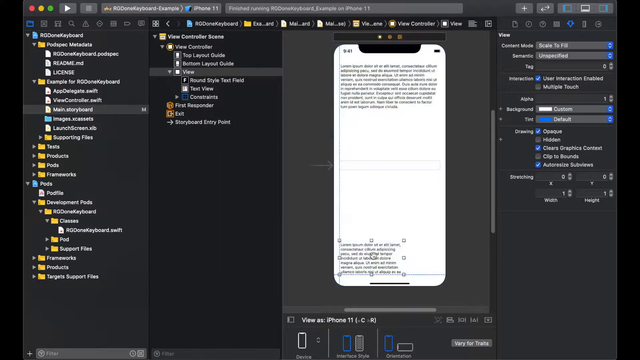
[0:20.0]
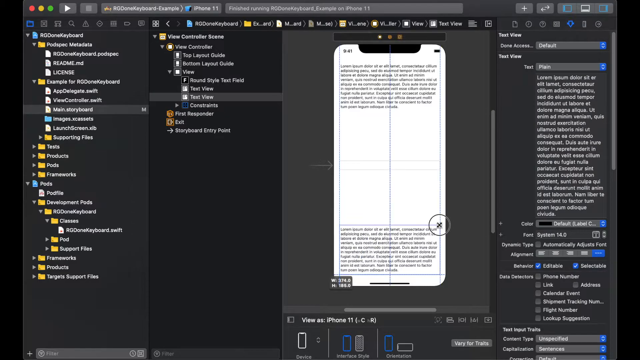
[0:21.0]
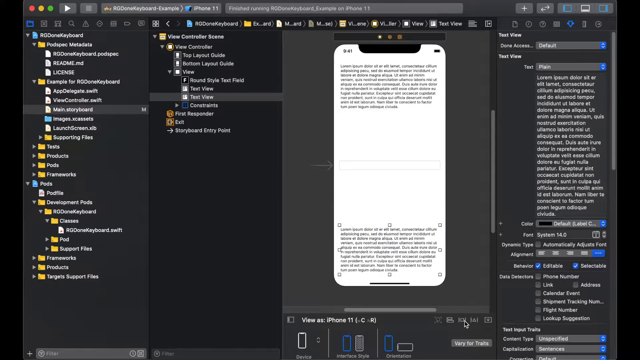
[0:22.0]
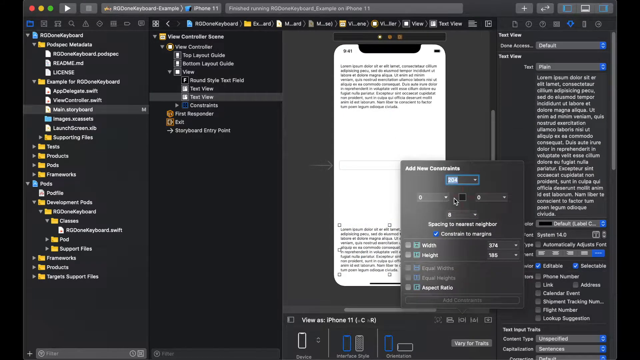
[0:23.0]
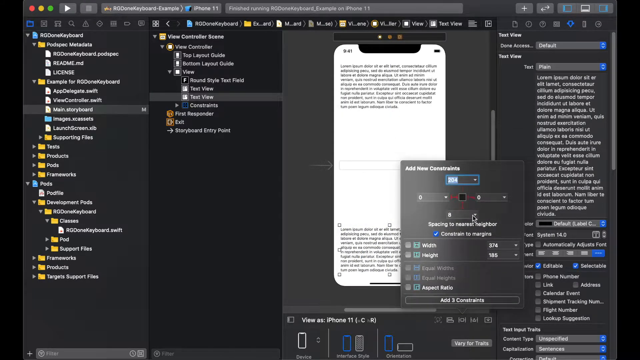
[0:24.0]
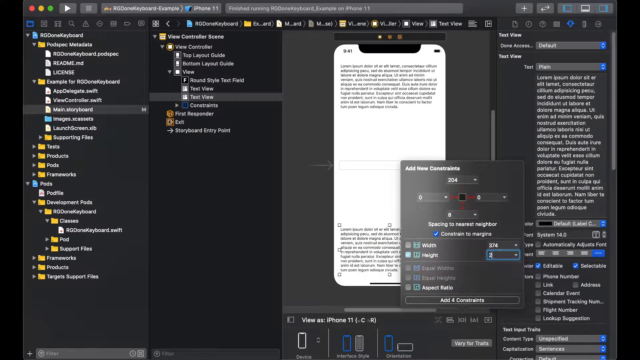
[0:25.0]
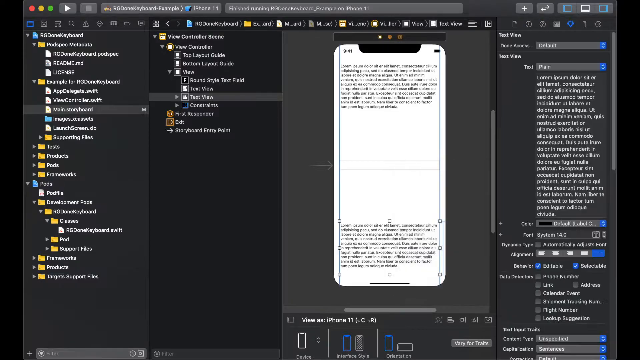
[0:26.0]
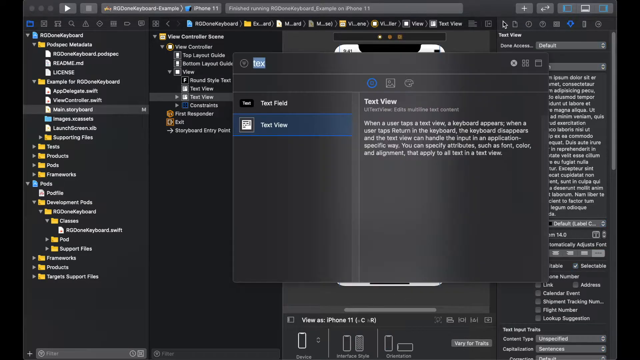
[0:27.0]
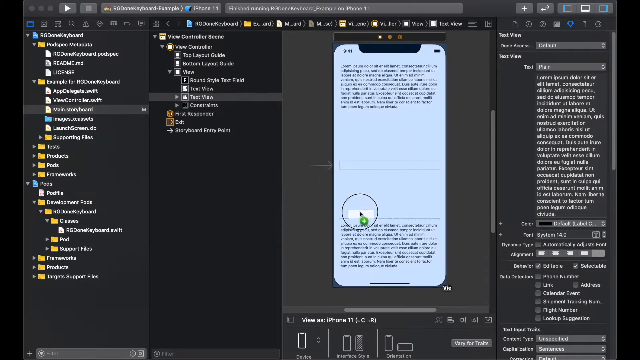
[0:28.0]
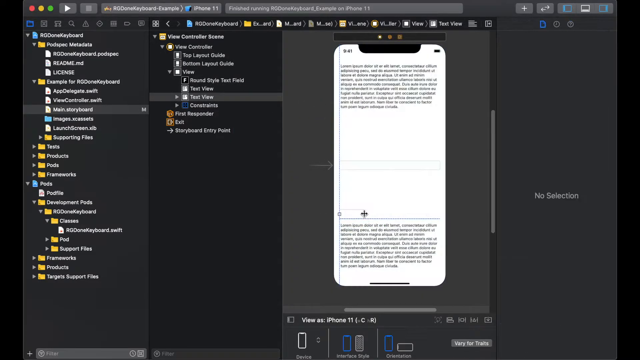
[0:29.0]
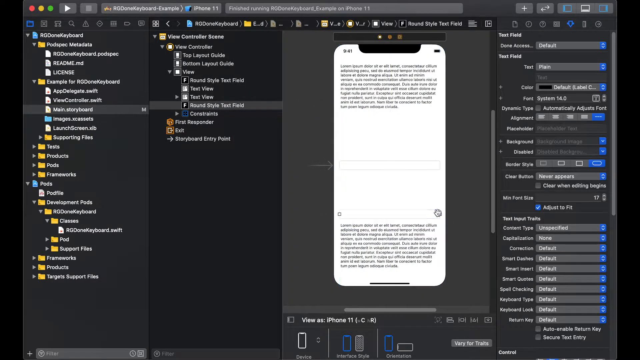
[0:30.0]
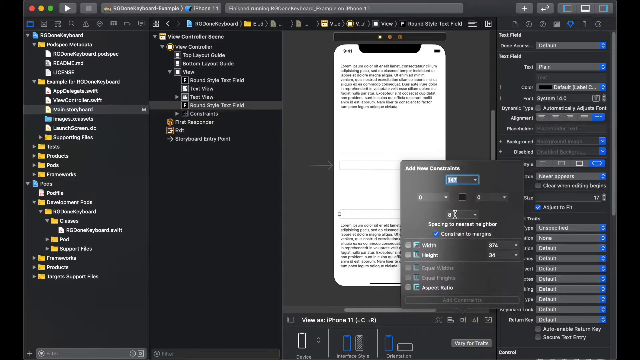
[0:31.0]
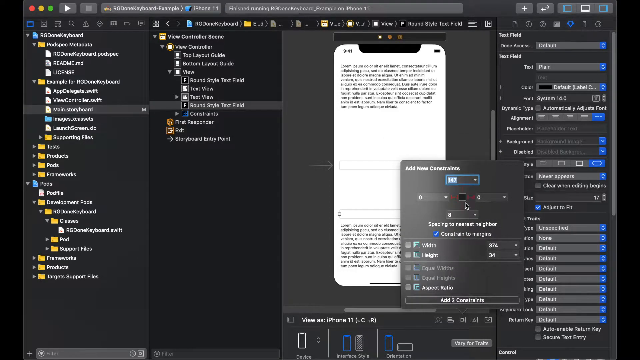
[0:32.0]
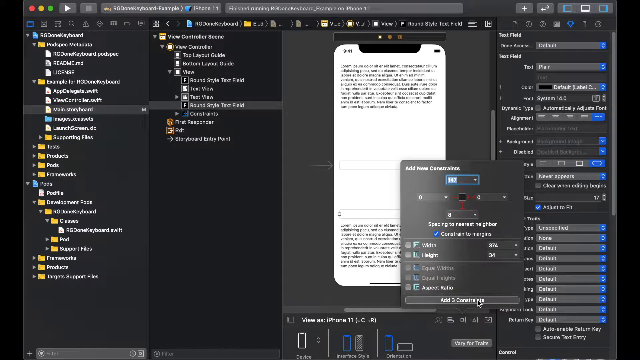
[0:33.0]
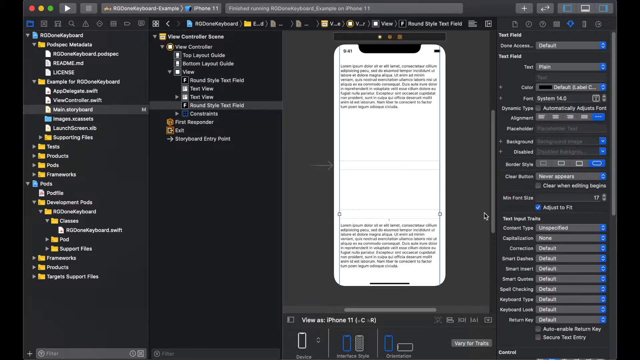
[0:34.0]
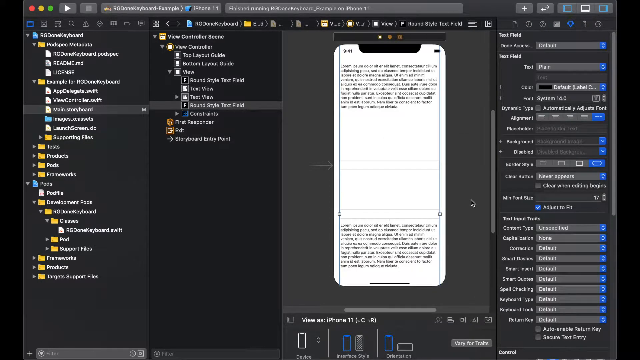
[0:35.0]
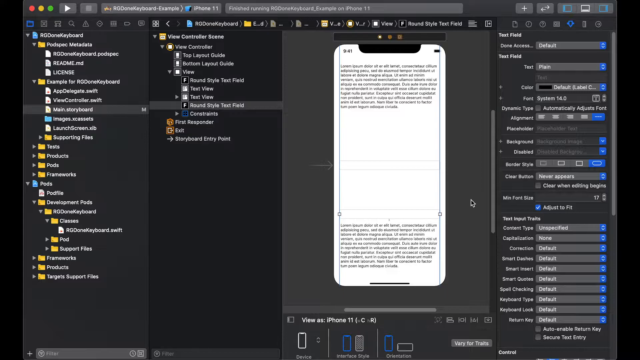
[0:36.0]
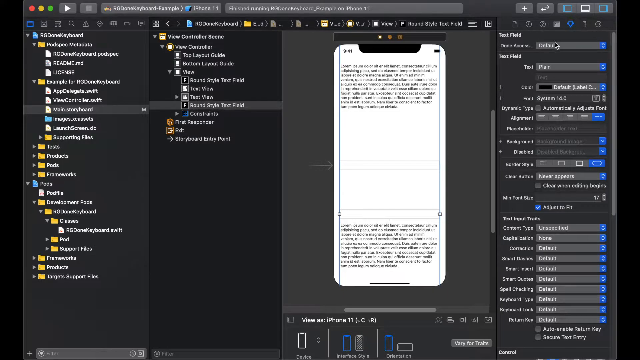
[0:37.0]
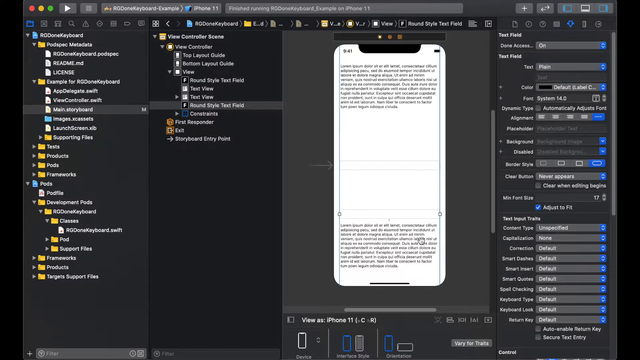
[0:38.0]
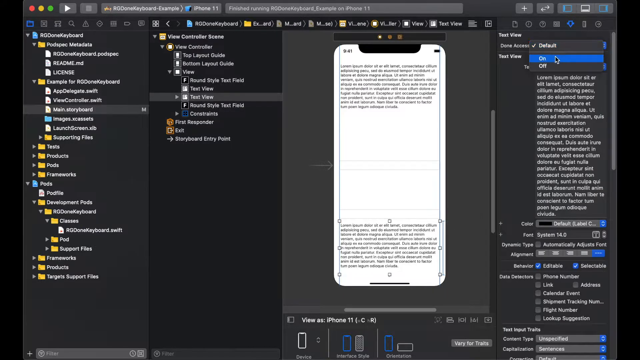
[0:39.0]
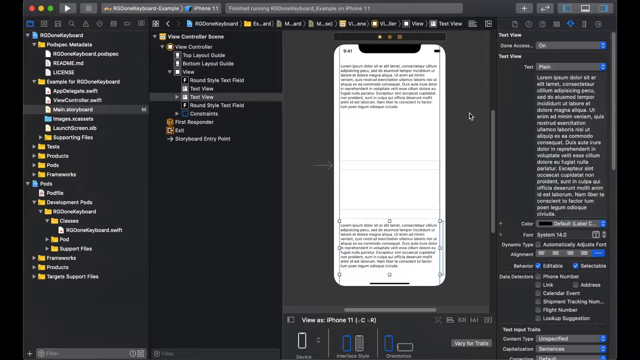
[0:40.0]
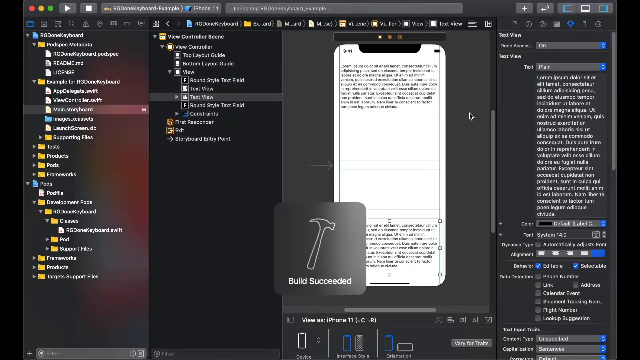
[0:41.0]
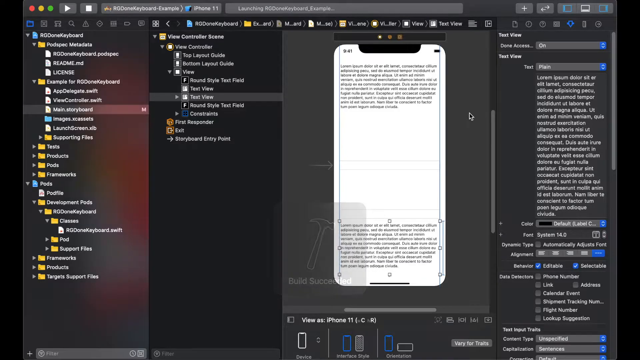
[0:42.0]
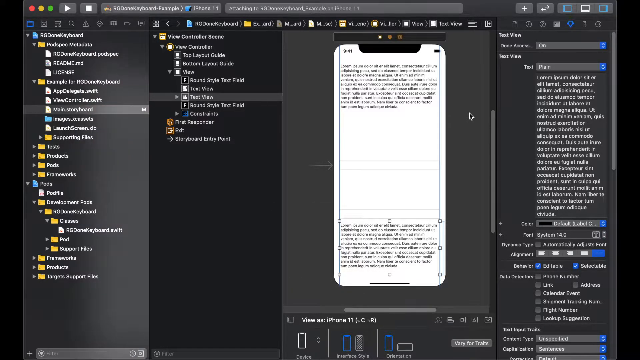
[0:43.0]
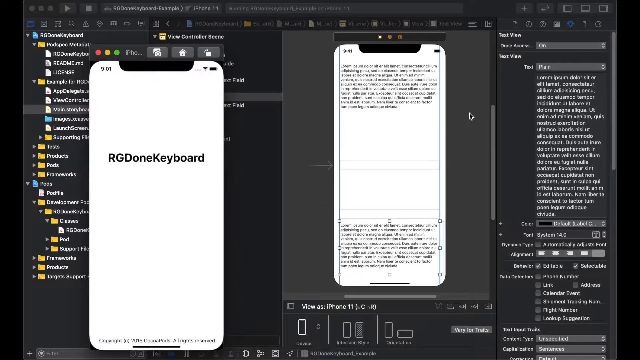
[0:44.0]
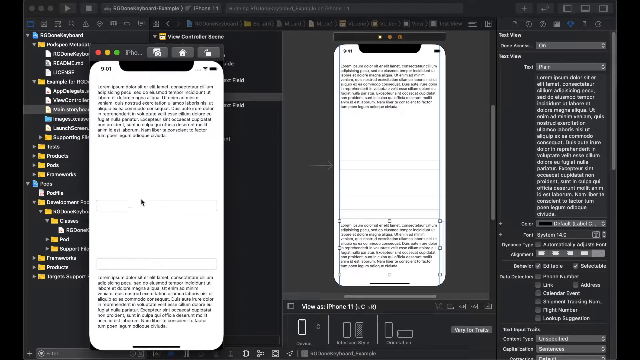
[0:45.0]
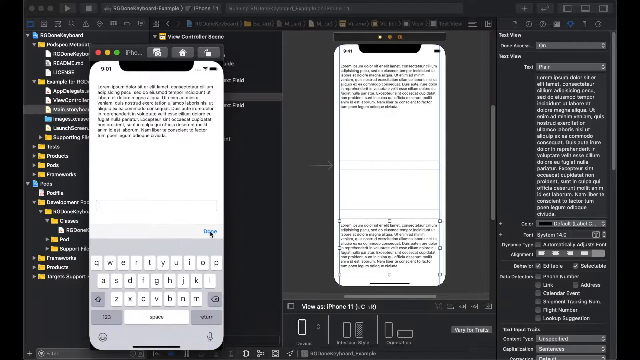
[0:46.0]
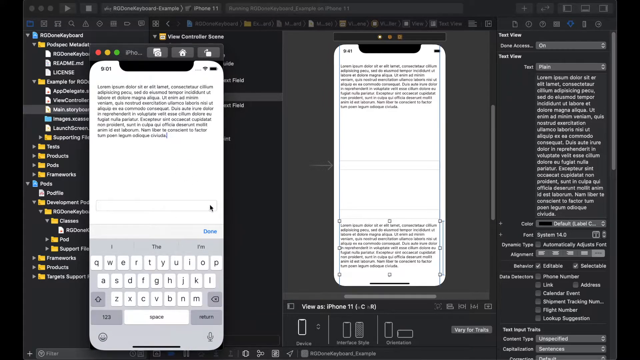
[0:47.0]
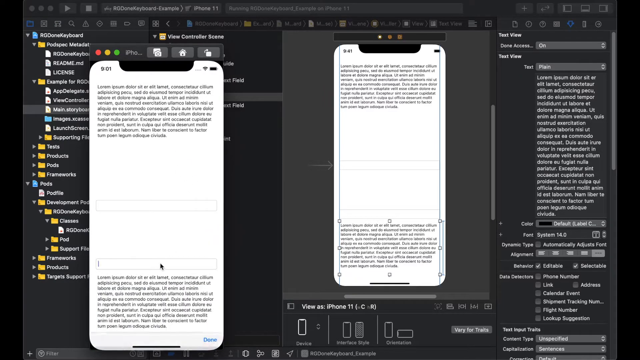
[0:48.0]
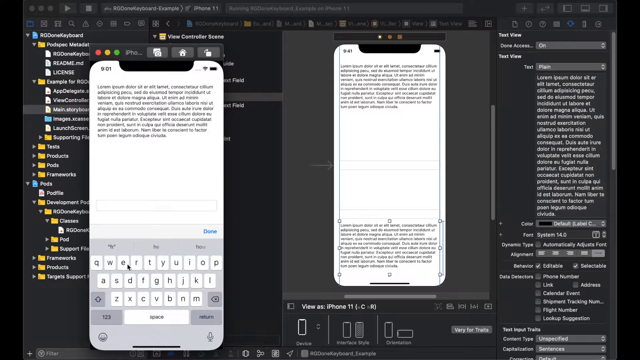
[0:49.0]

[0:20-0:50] An explorer page shows the file directory with several options open. On the right-hand side of the screen is a text view menu screen, and in the middle is an image of a phone screen. The phone screen is white and mostly open, with text at the top and the bottom. The cursor has dragged a completed text field onto the bottom lower left of the screen, and it then drags the size of the text to fill the bottom of the screen. The option "add new constraints" is selected. The mouse moves to change the height of the text box, then moves to the top of the screen, drags something down and adds a new field. It moves to the right of the screen and selects an option in the text field options, then moves back to the part of the screen showing the phone. "Build succeeded" appears on the screen with a picture of a hammer. On the left-hand side of the screen, the phone screen appears again.